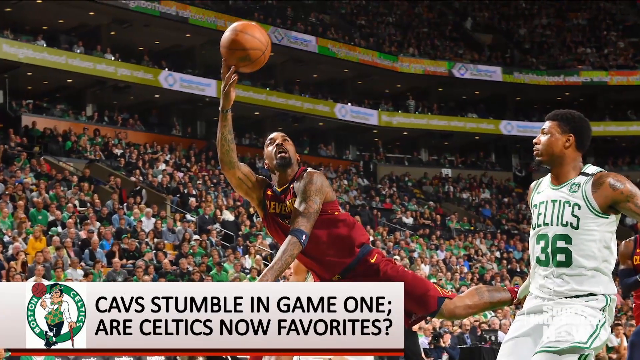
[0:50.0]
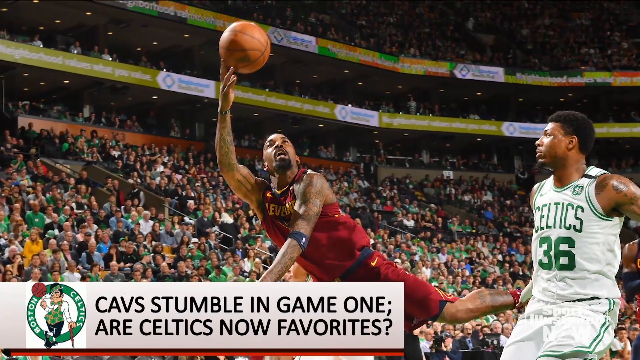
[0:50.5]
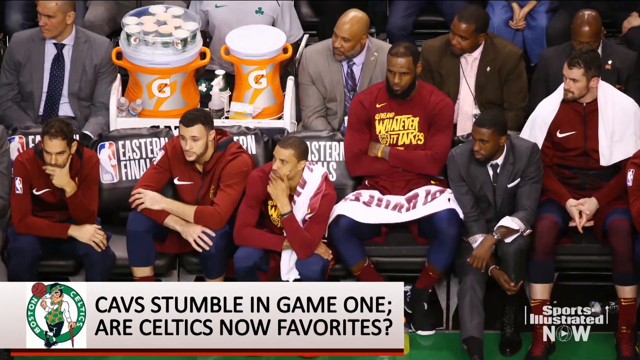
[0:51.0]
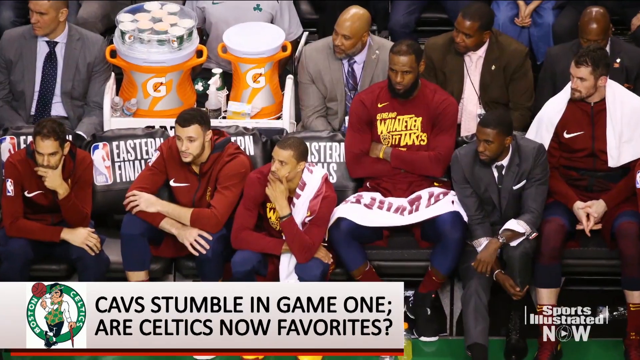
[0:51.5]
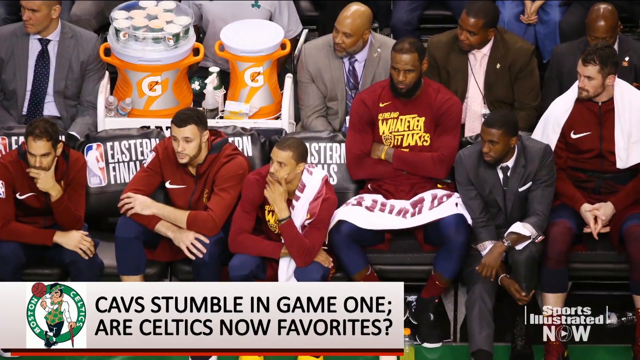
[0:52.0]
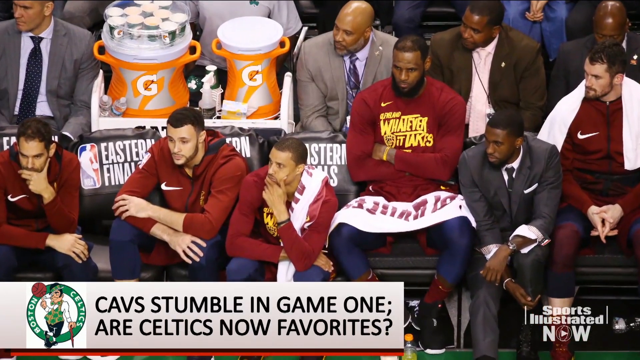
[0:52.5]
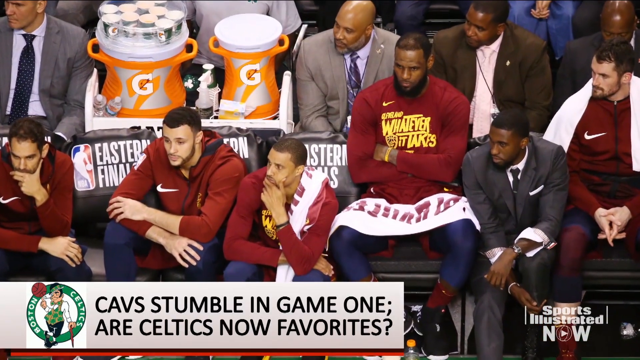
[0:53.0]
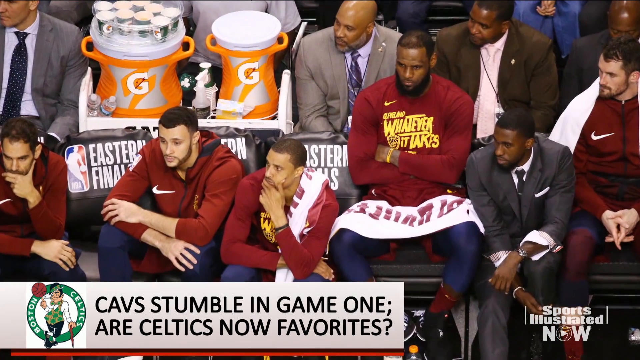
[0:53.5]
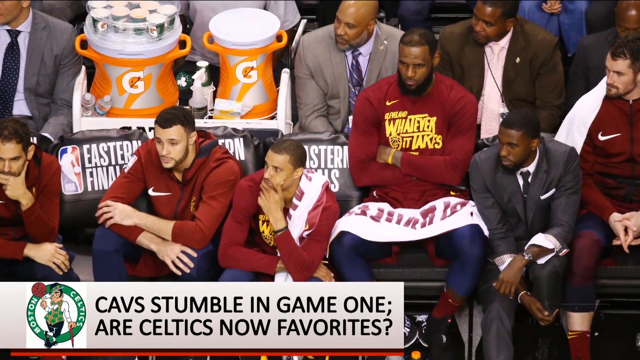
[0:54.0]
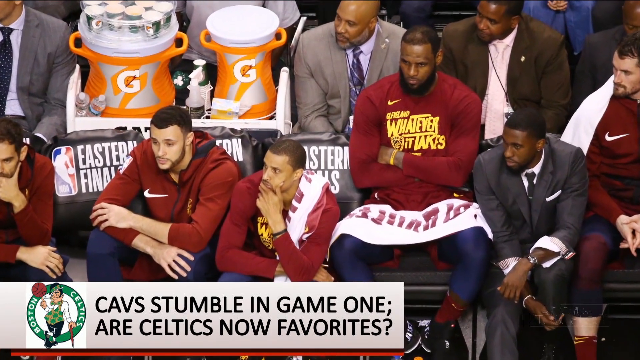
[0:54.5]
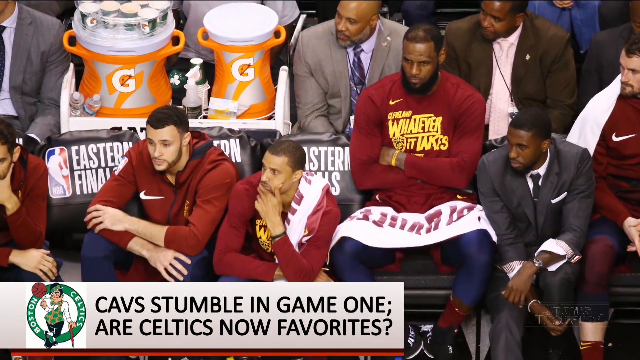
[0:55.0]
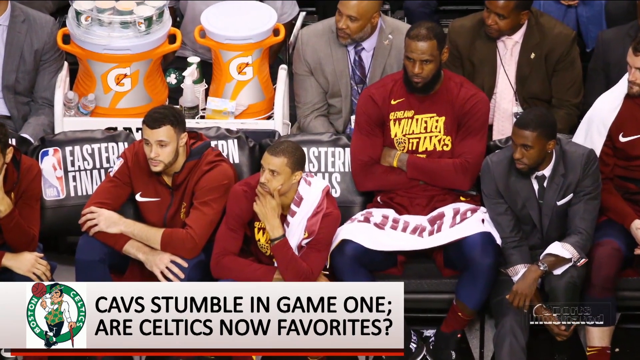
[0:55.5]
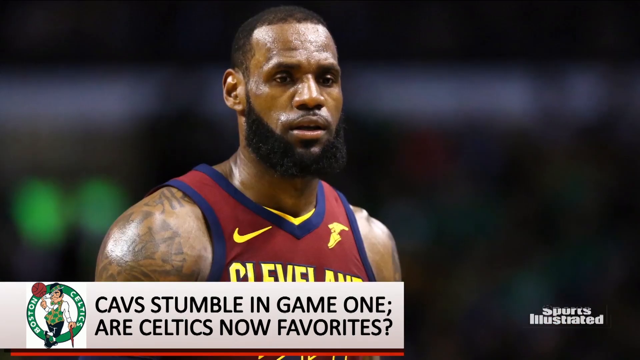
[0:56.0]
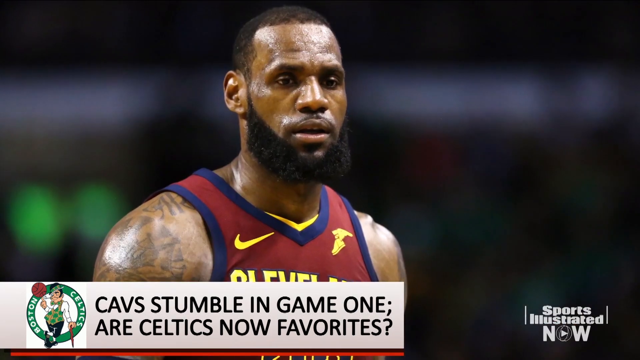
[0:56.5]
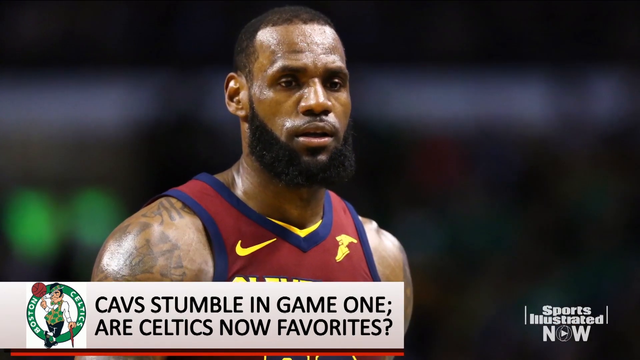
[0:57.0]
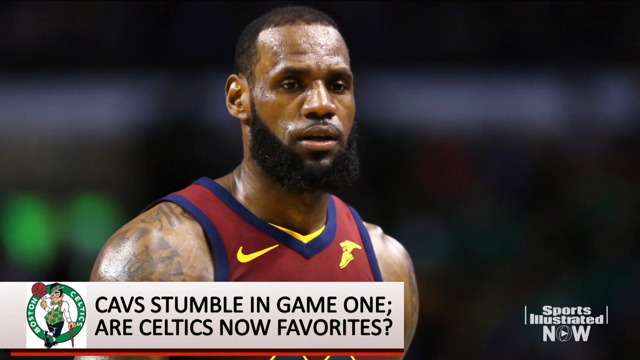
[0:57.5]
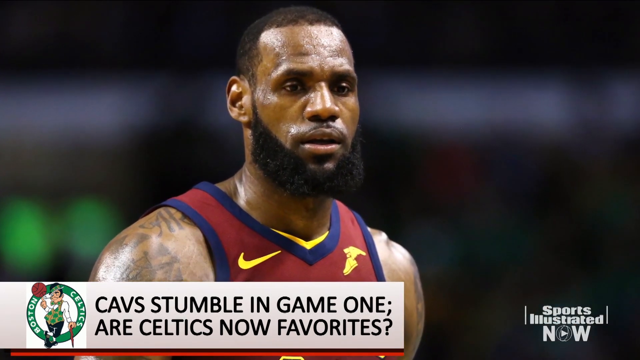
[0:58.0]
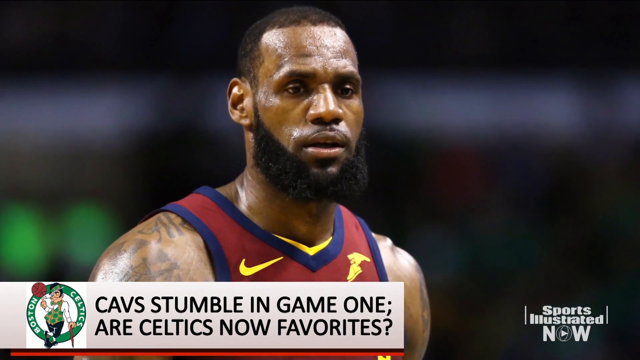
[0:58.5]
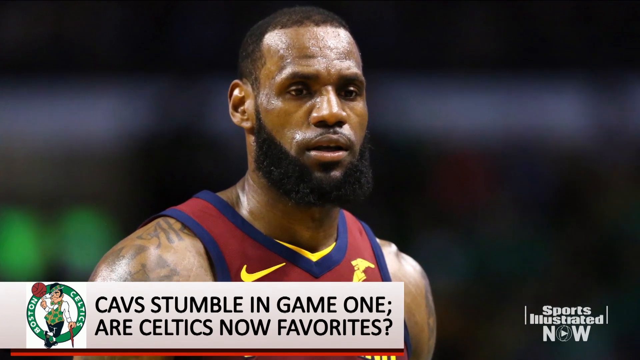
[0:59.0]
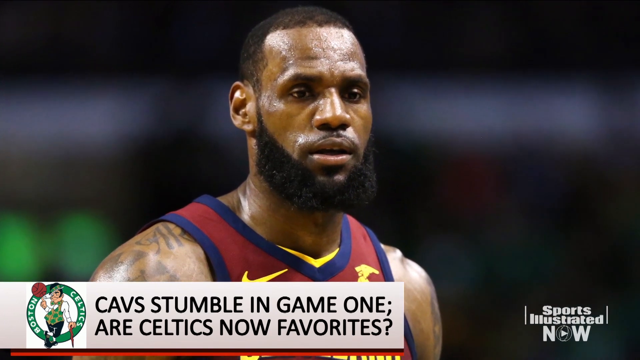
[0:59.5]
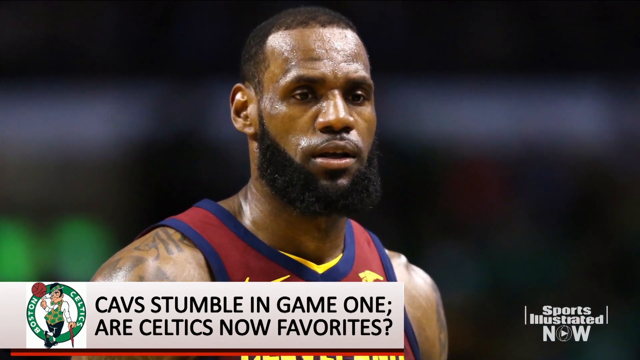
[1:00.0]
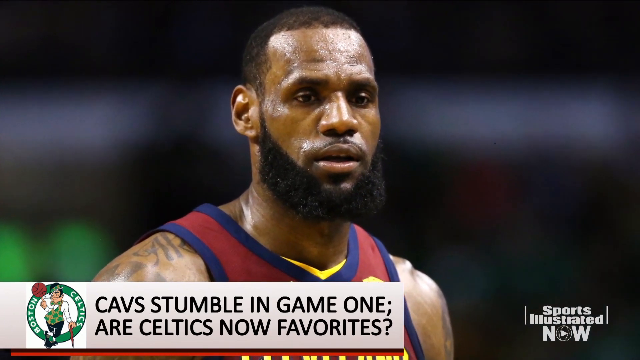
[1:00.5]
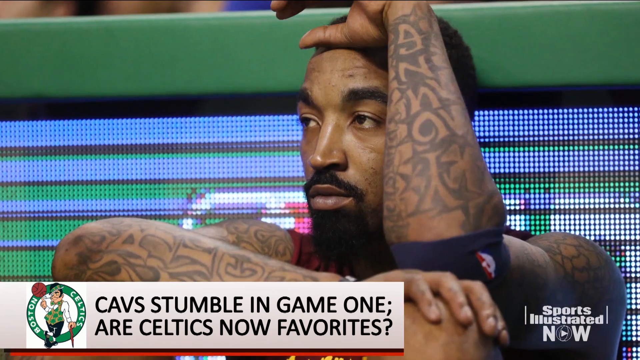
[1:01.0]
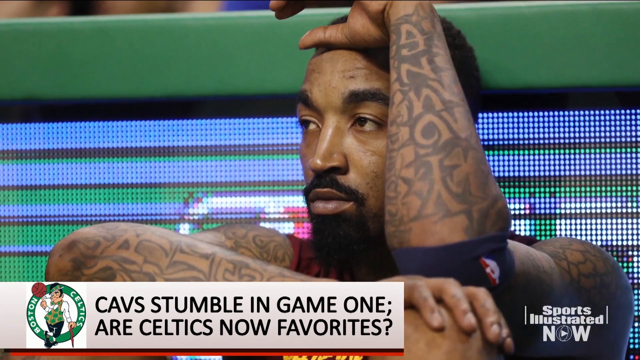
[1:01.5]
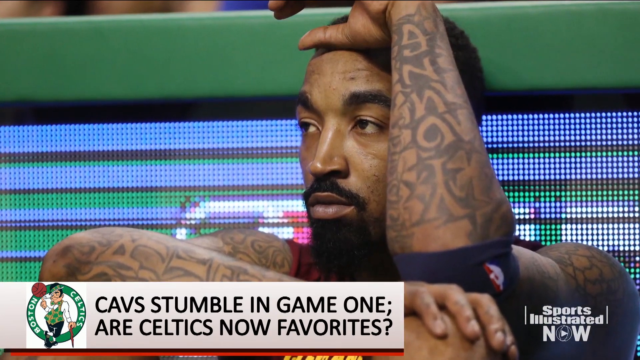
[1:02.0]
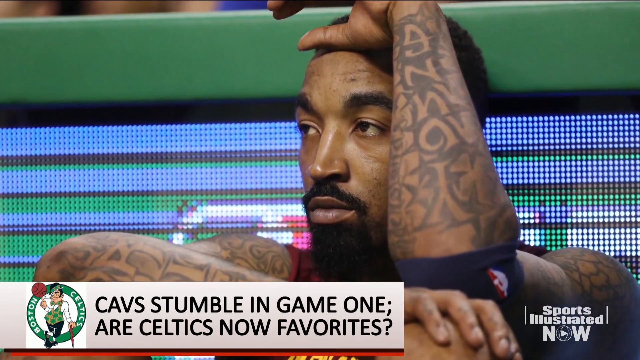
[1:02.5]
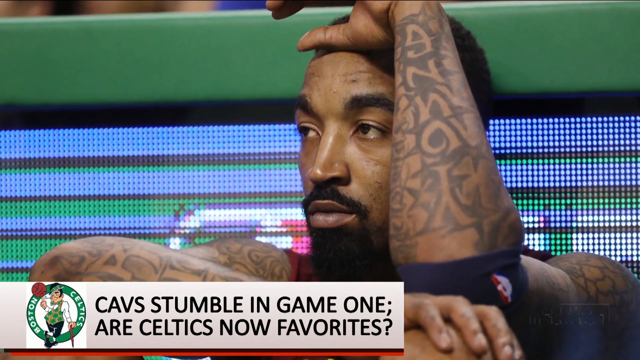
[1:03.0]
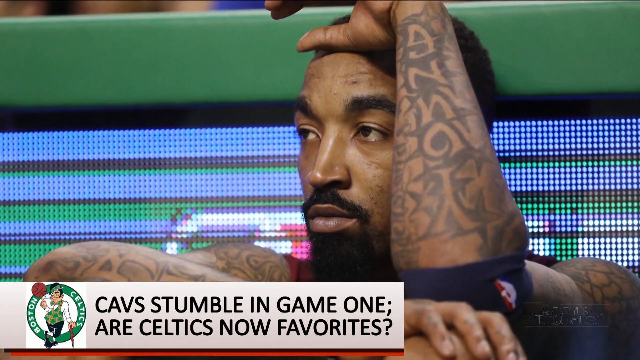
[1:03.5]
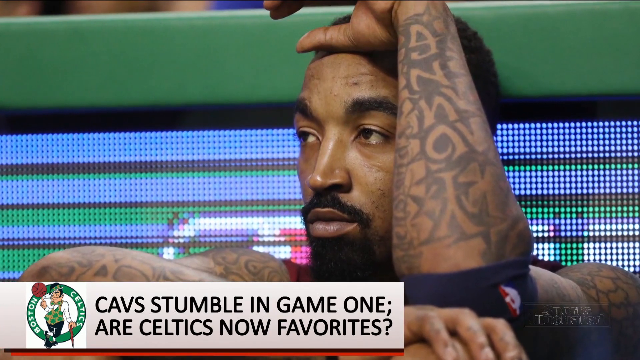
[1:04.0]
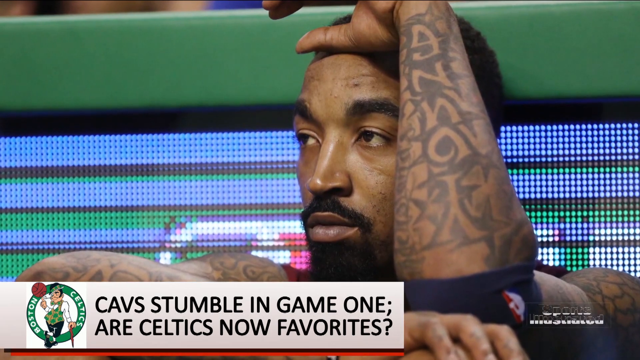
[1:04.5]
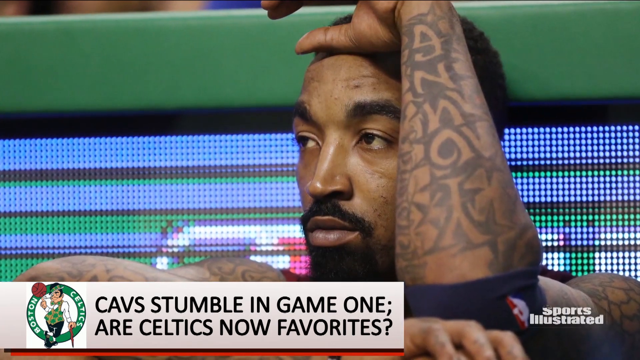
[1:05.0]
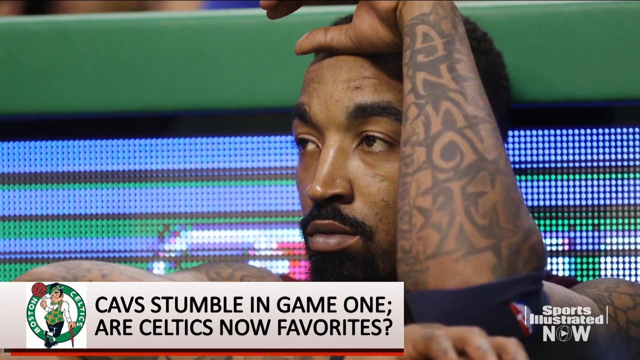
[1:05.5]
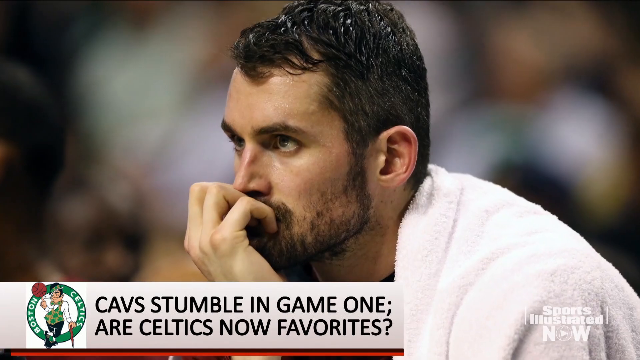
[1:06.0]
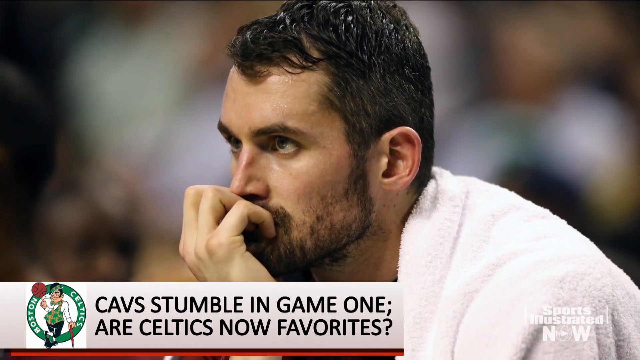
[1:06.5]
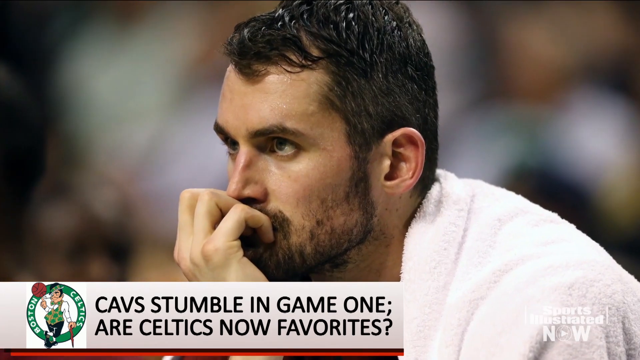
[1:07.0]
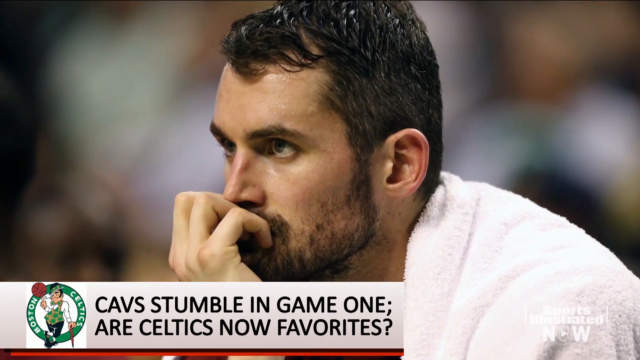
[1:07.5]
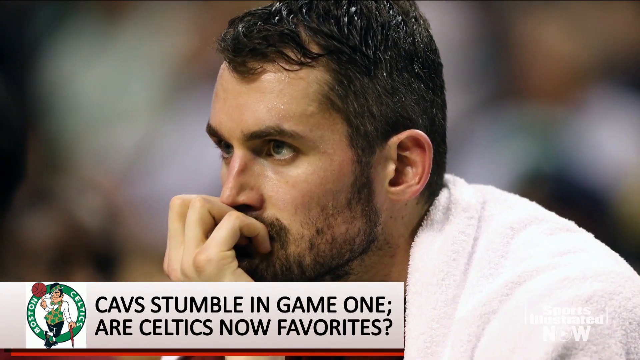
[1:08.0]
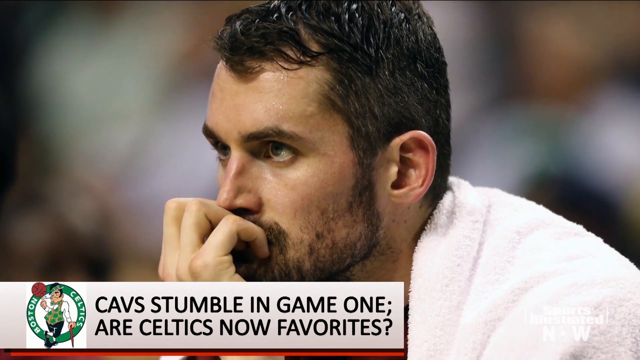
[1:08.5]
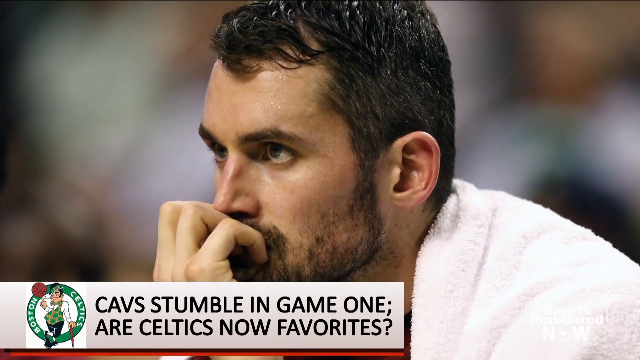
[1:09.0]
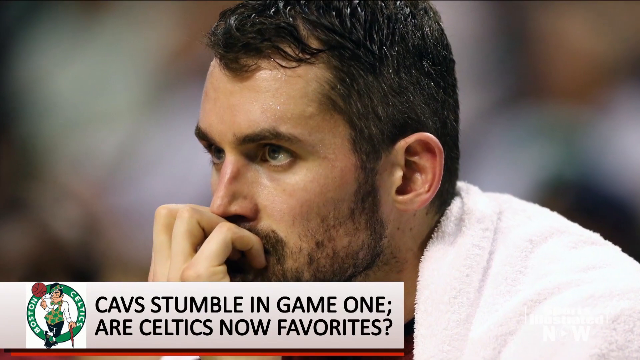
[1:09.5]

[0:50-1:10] A slide shows highlights from the Cavaliers and Celtics game, with some Cavaliers players sitting on the bench looking a little frustrated. The on-screen text box says "Cavs stumbled in game one versus Celtics," suggesting the Celtics may now be the favorites. LeBron James does not look happy, and a man in a tan suit and blue tie sits right behind him; everybody looks kind of down. To the left of LeBron are Gatorade coolers, one with cups on top for the players' drinks. The next slide shows LeBron by himself, looking tired and worn out. Another slide shows a teammate with his hand on his head, looking frustrated, and another shows a player biting his fingernails, looking frustrated.